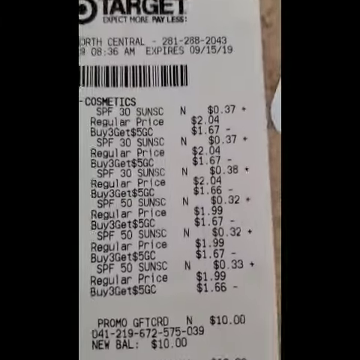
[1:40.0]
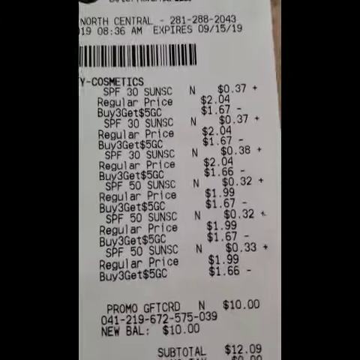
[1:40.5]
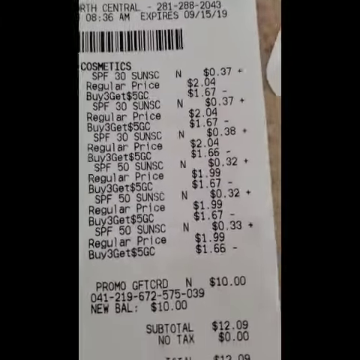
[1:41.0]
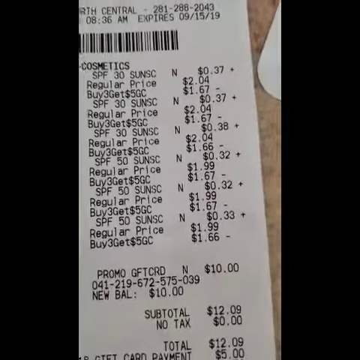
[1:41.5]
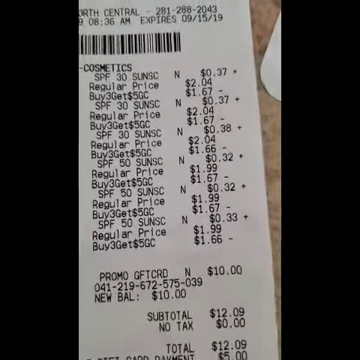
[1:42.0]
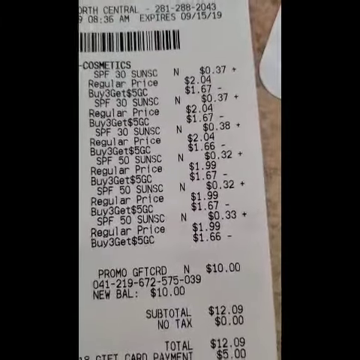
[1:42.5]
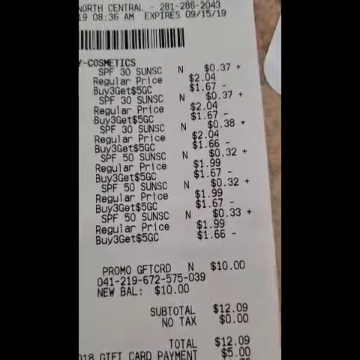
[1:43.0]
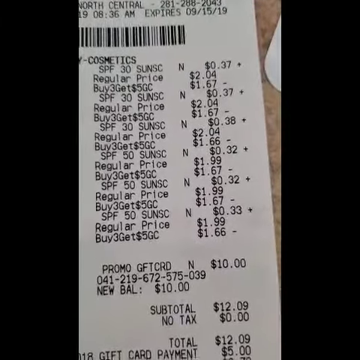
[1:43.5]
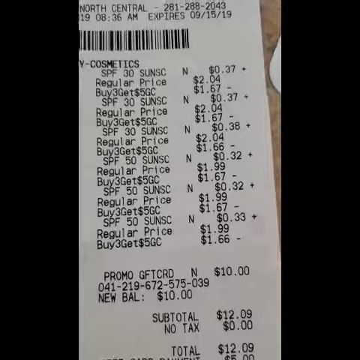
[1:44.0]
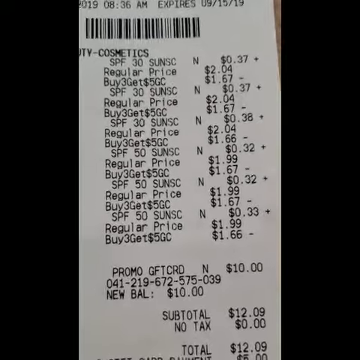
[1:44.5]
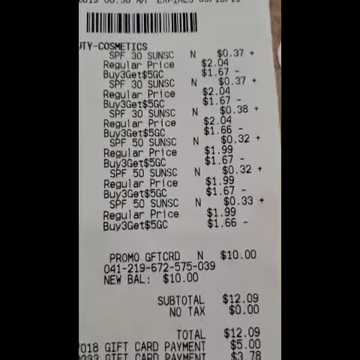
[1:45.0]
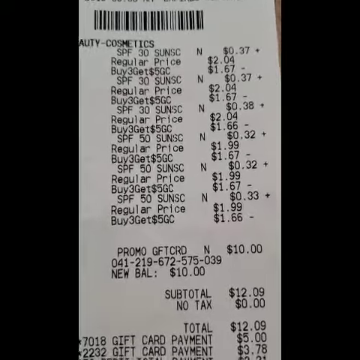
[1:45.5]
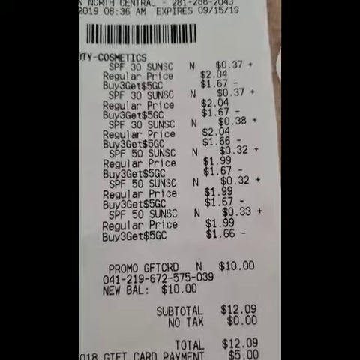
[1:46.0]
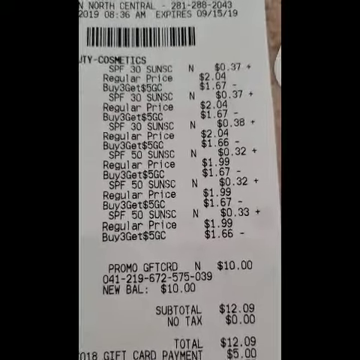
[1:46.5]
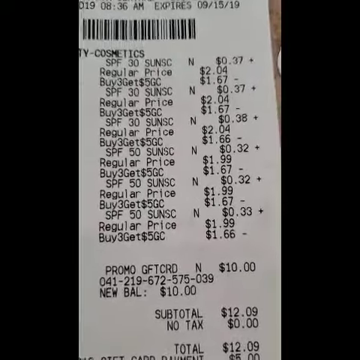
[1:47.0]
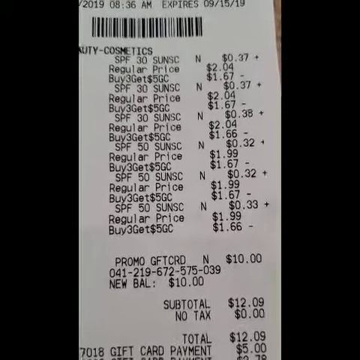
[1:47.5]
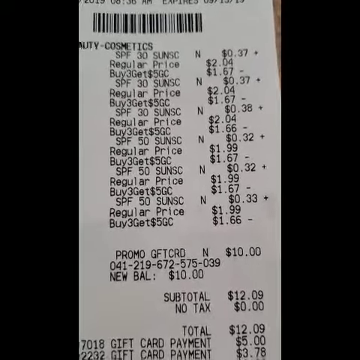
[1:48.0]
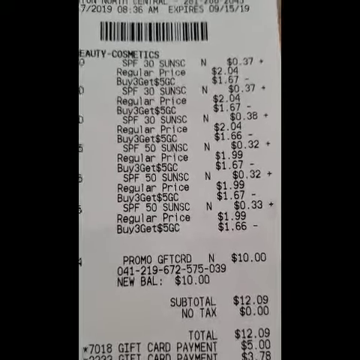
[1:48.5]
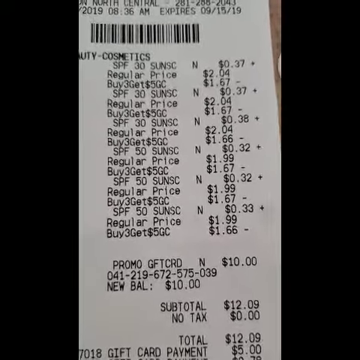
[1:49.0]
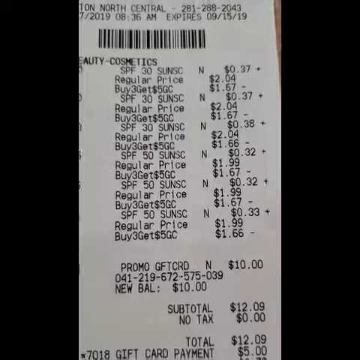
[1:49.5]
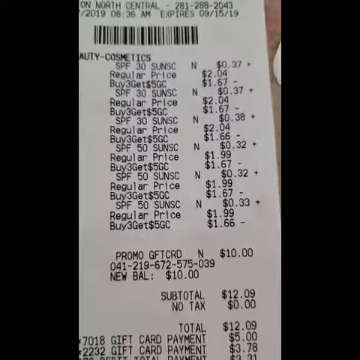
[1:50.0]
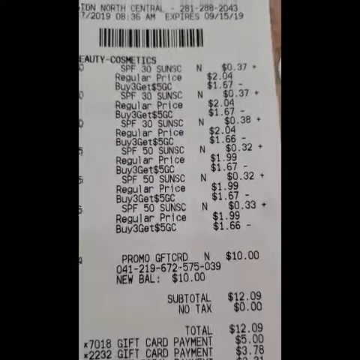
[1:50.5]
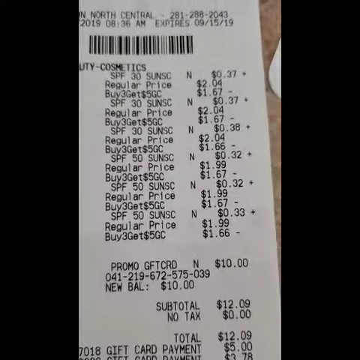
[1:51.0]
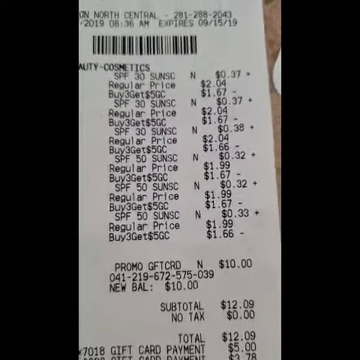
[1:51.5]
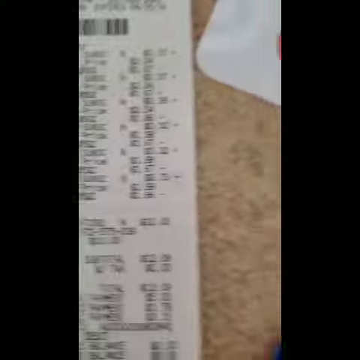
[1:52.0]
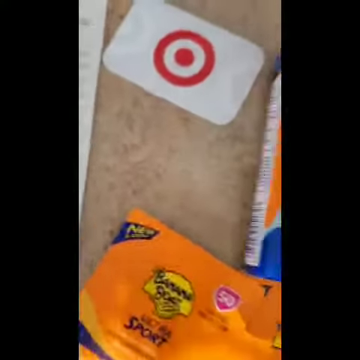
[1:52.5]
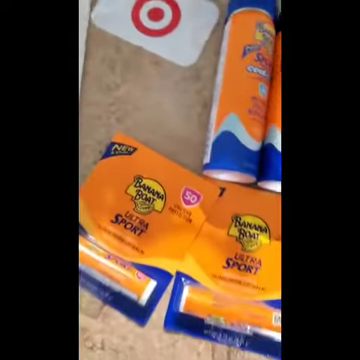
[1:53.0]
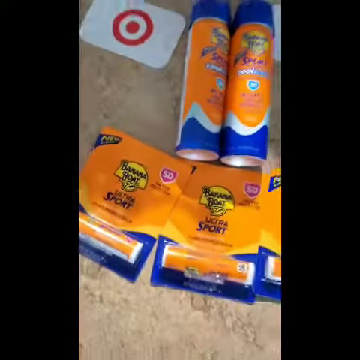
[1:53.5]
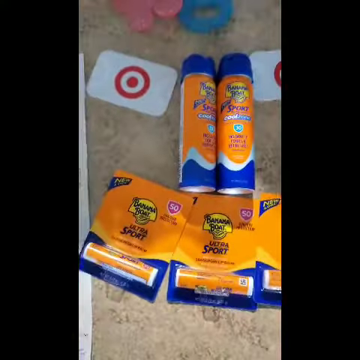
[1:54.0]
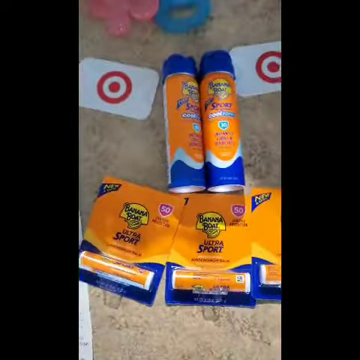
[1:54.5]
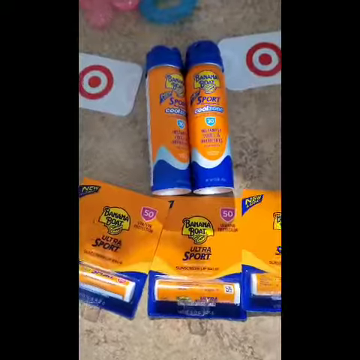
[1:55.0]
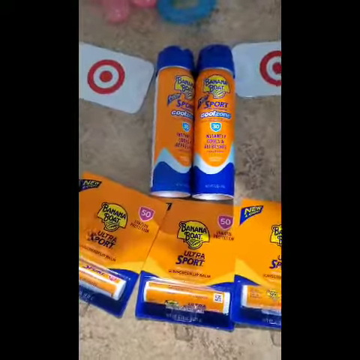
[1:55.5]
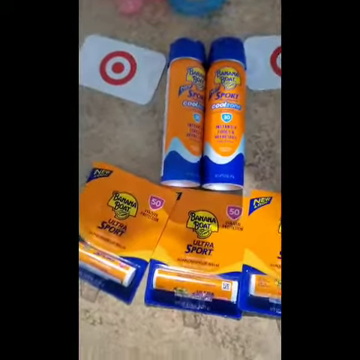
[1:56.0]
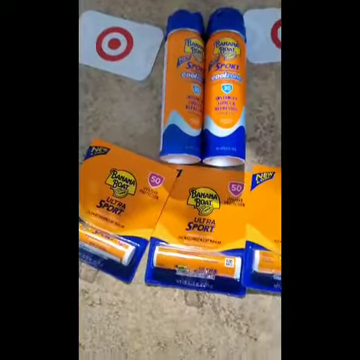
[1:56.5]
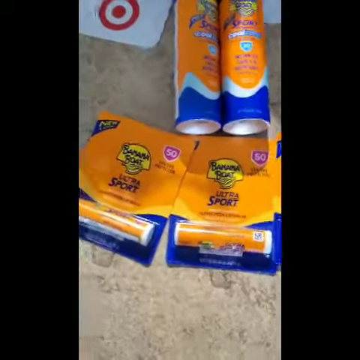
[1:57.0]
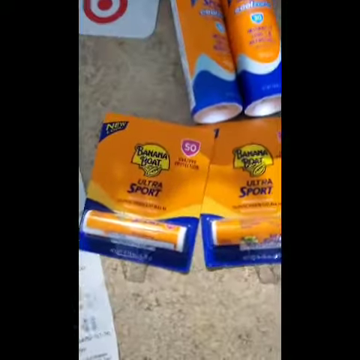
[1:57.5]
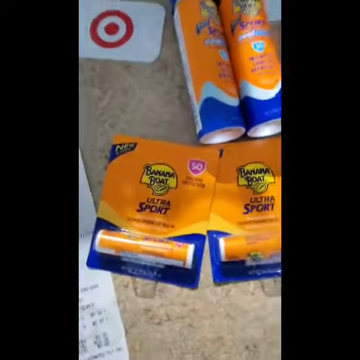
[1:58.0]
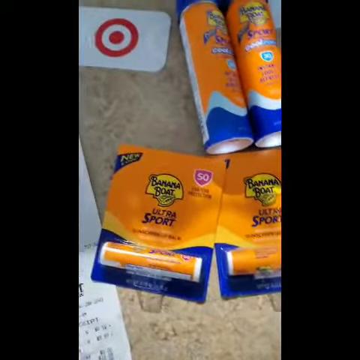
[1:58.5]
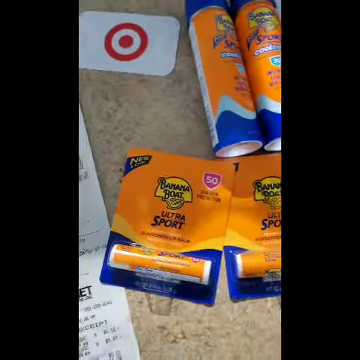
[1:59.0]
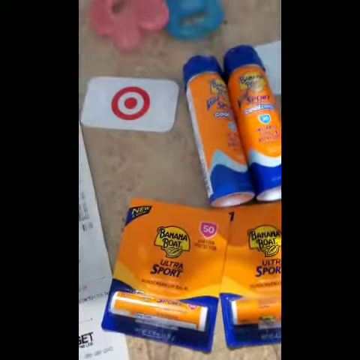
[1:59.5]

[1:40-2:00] The shot begins on the Target receipt for the sunscreens. On its left side is a special: buy three, get a $5 gift card. Toward the bottom of the receipt, it shows the buyer received two gift cards totaling $10, and the subtotal for all the sunscreens is $12.09. The camera is a little shaky and moves around, showing various things. It then pans out, and the Banana Boat sunscreen lip balm and the Banana Boat aerosol spray sunscreen are briefly visible. In the top corner above the sunscreens are a blue toy and a pink toy that vaguely look like rattles. The video is probably an ad for a person's own social media or videos; it is not very professionally done but shows a lot of detail.